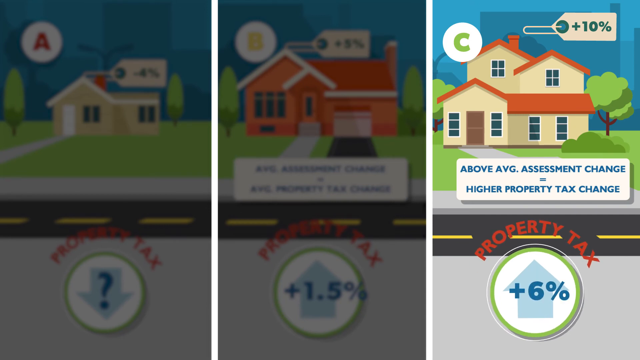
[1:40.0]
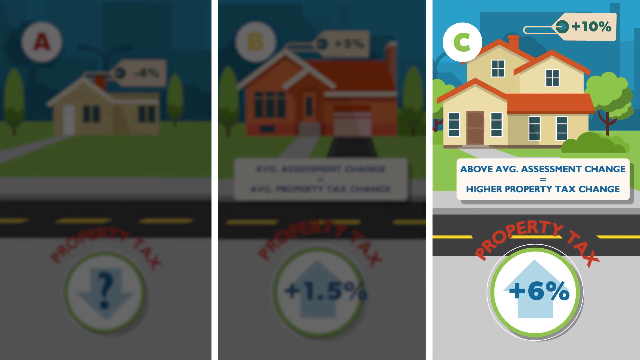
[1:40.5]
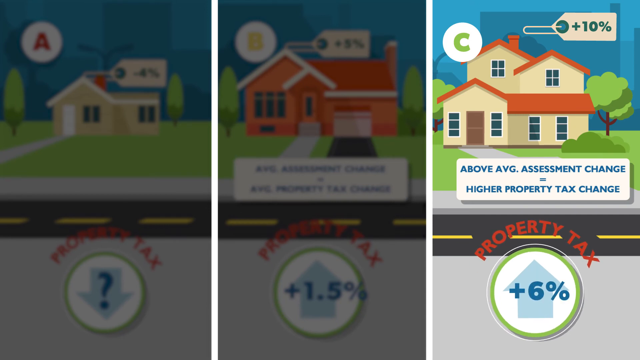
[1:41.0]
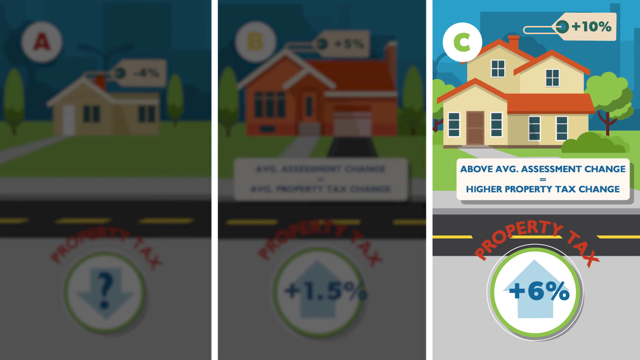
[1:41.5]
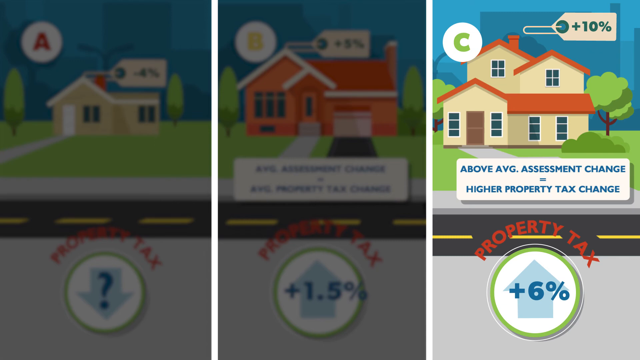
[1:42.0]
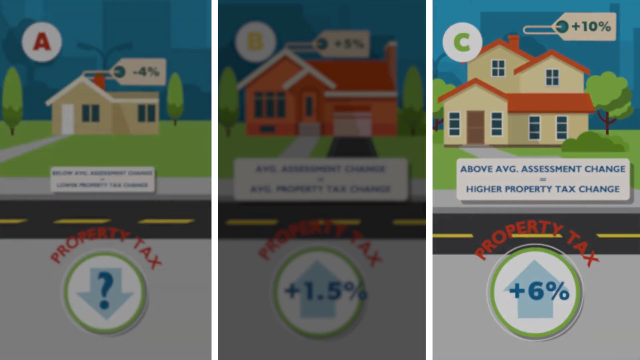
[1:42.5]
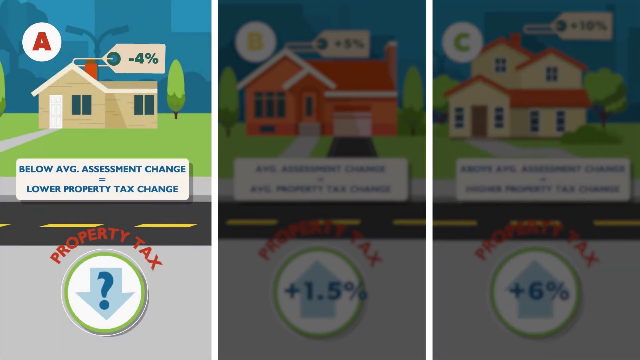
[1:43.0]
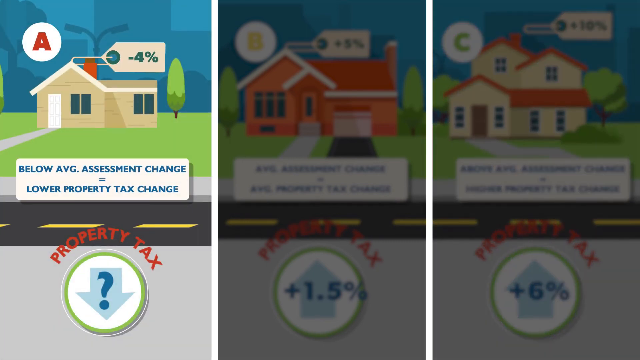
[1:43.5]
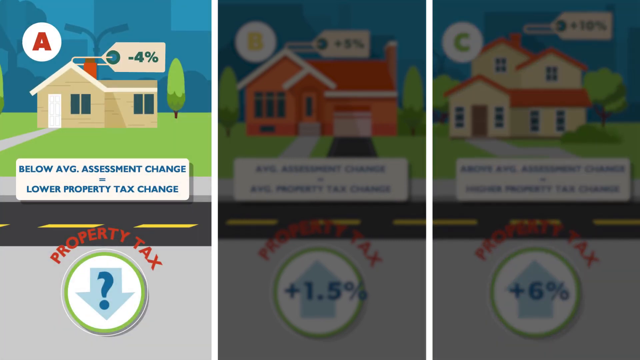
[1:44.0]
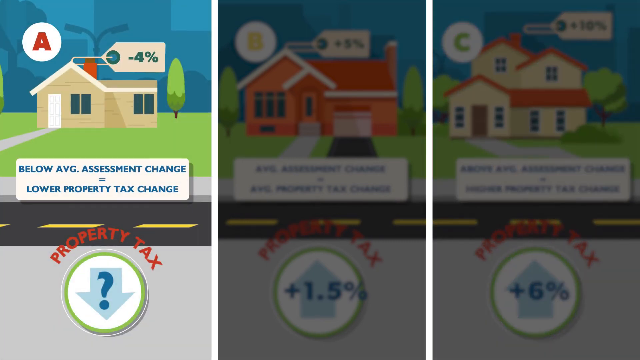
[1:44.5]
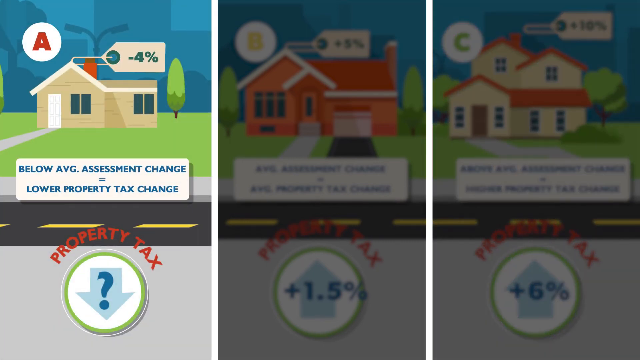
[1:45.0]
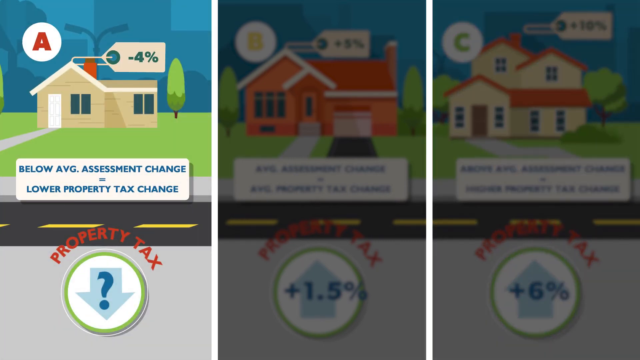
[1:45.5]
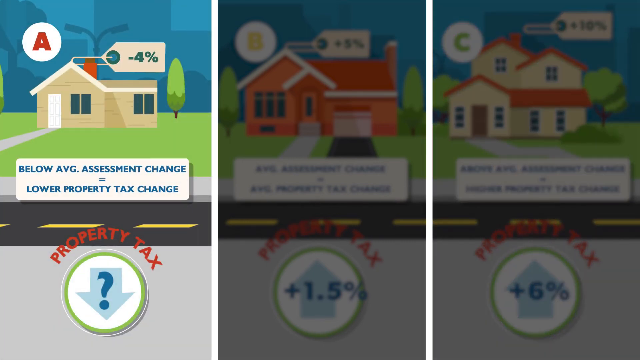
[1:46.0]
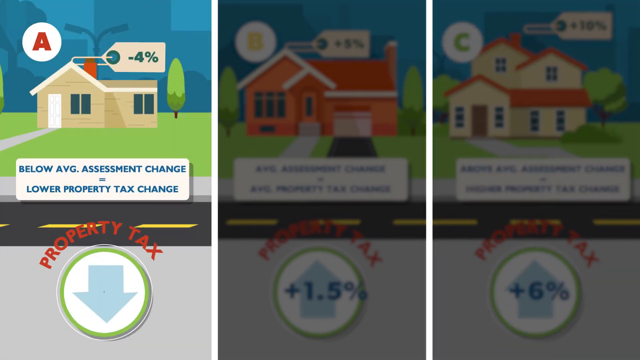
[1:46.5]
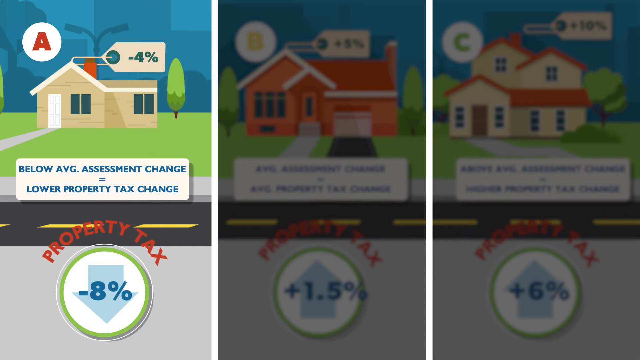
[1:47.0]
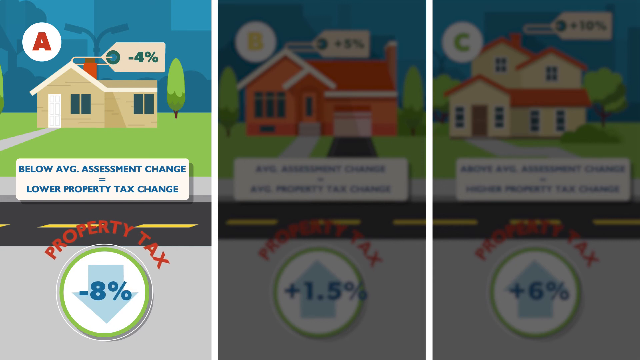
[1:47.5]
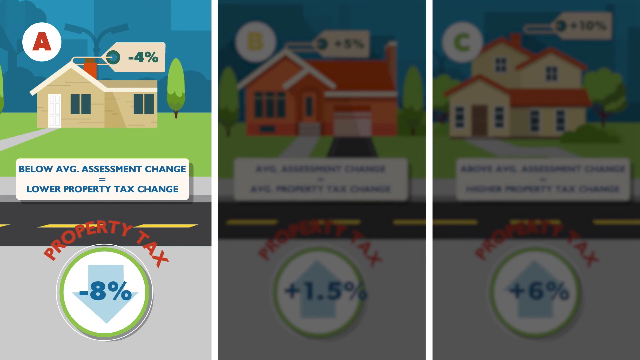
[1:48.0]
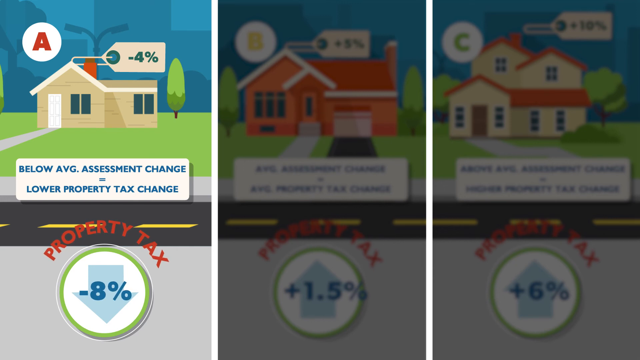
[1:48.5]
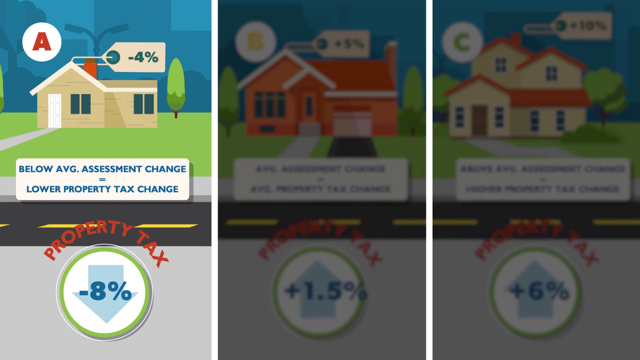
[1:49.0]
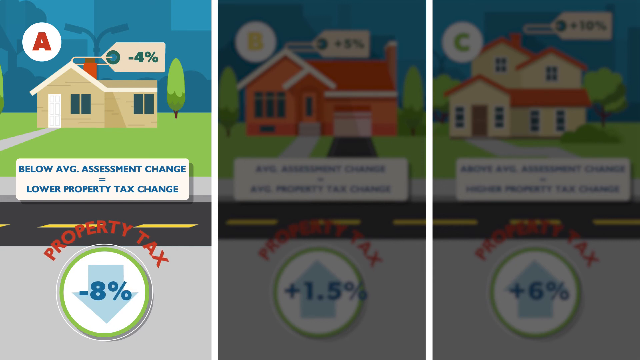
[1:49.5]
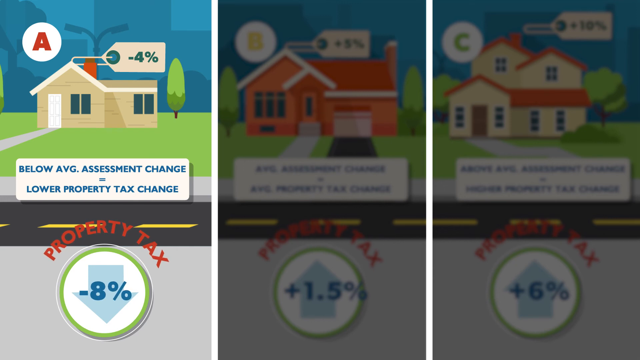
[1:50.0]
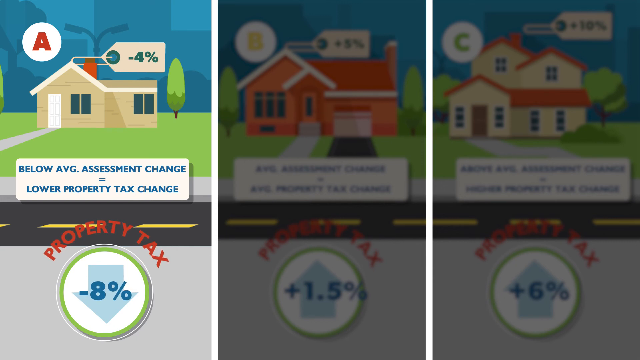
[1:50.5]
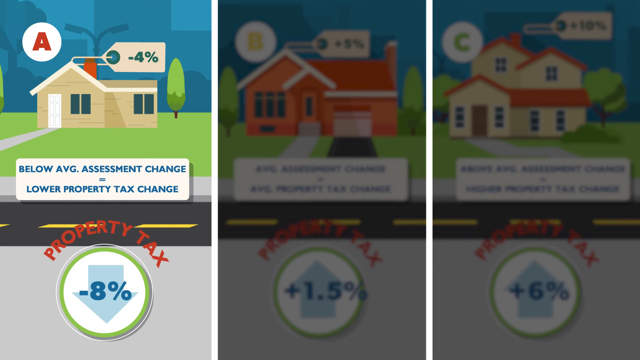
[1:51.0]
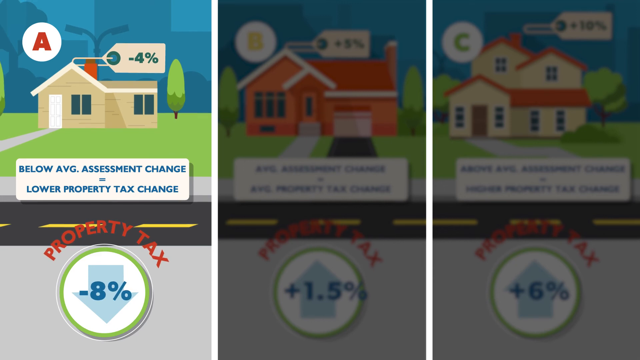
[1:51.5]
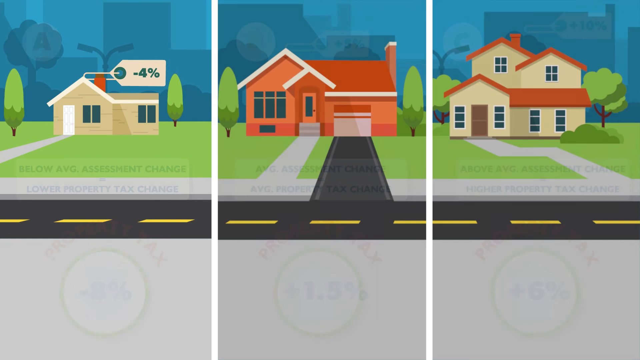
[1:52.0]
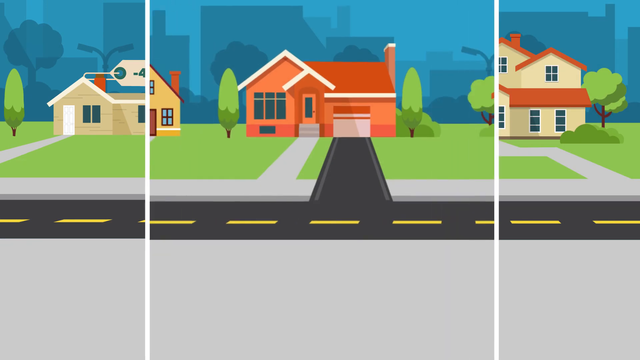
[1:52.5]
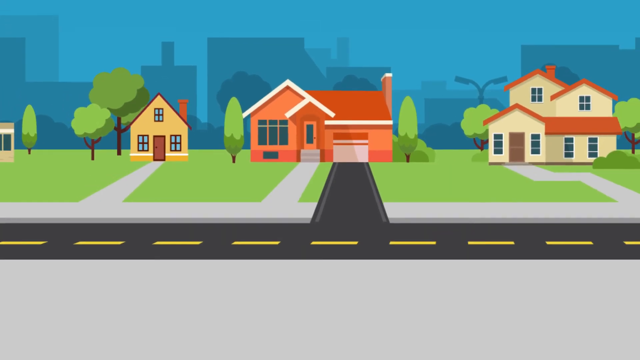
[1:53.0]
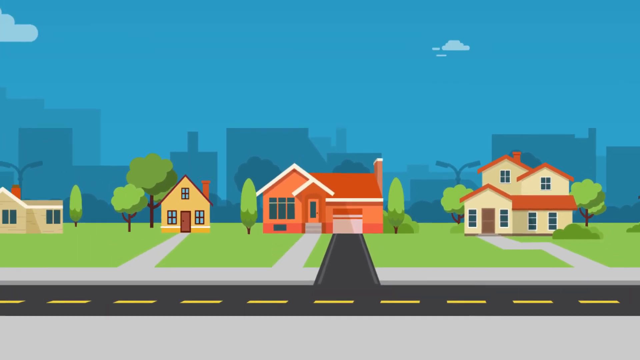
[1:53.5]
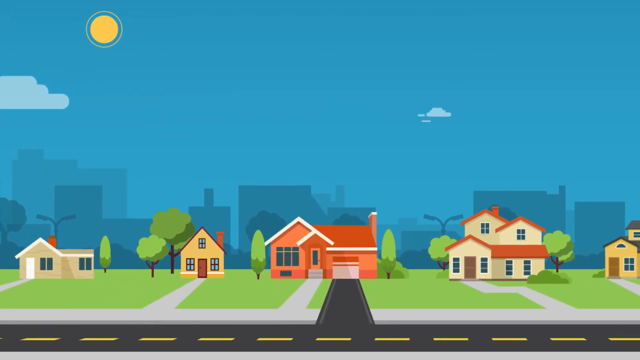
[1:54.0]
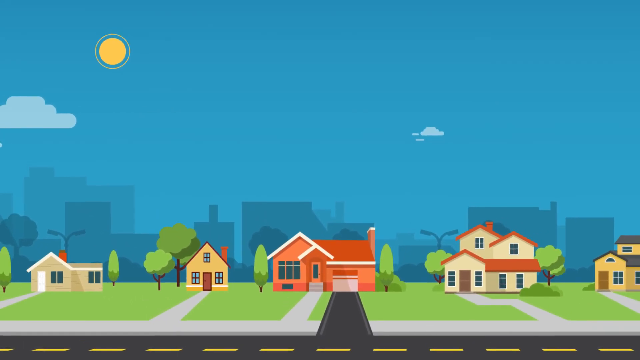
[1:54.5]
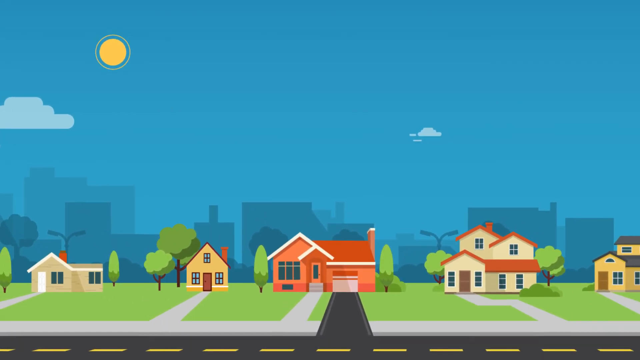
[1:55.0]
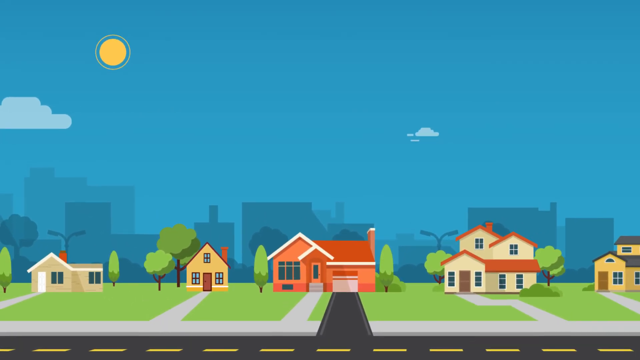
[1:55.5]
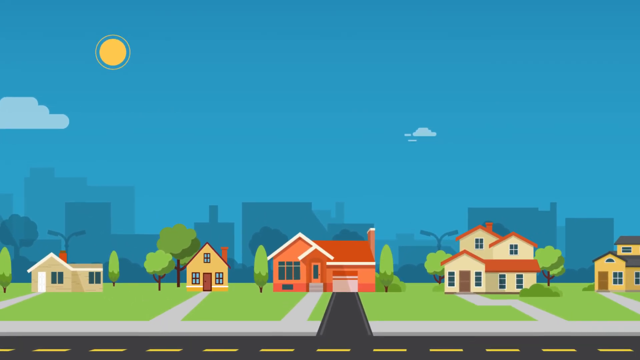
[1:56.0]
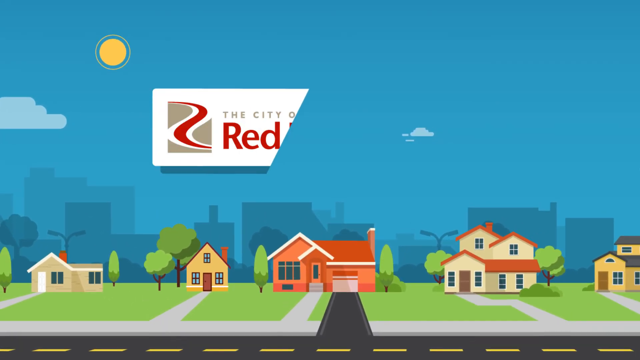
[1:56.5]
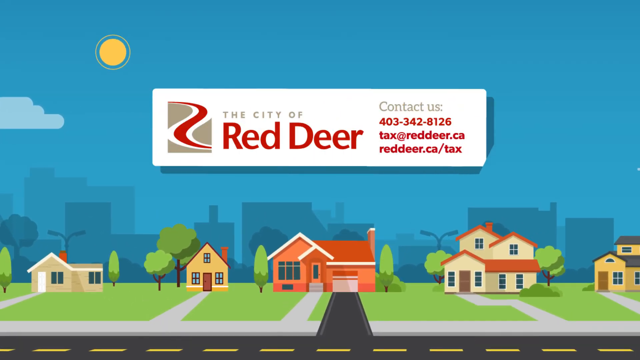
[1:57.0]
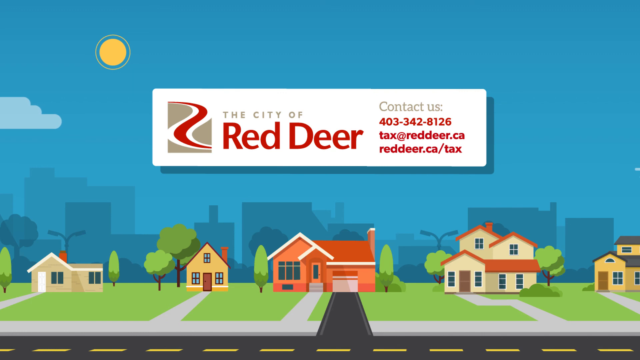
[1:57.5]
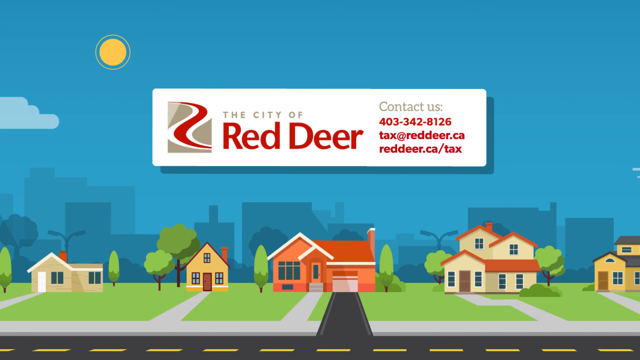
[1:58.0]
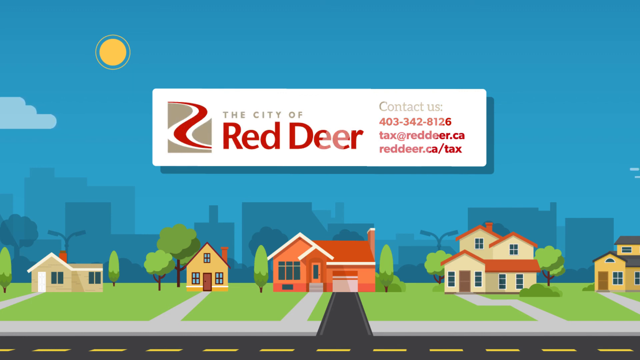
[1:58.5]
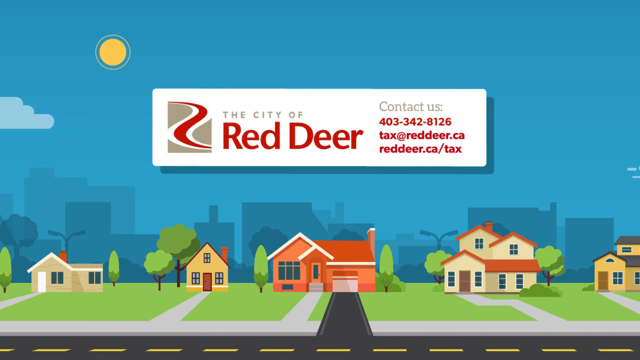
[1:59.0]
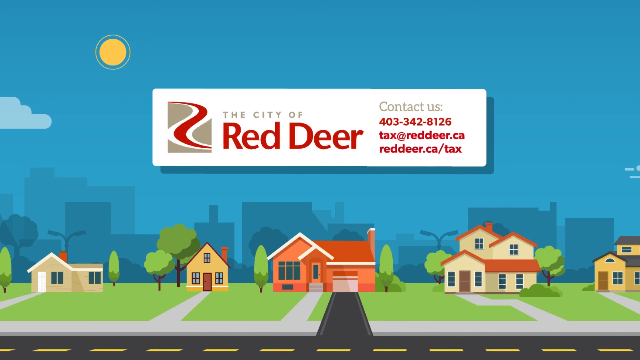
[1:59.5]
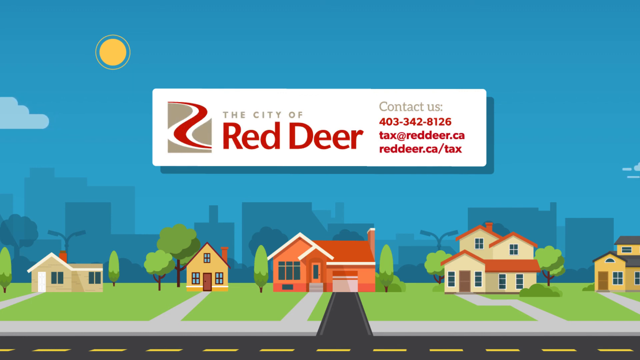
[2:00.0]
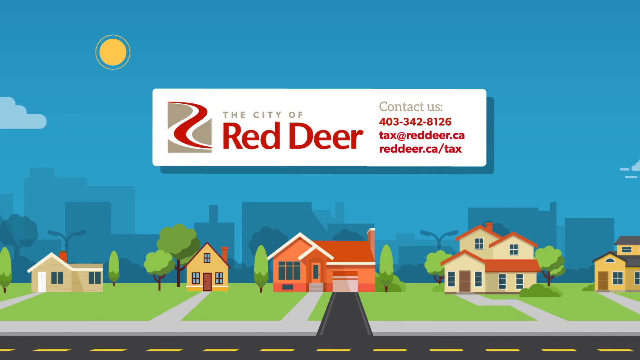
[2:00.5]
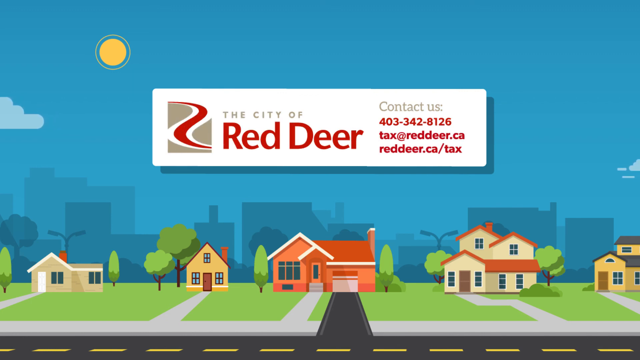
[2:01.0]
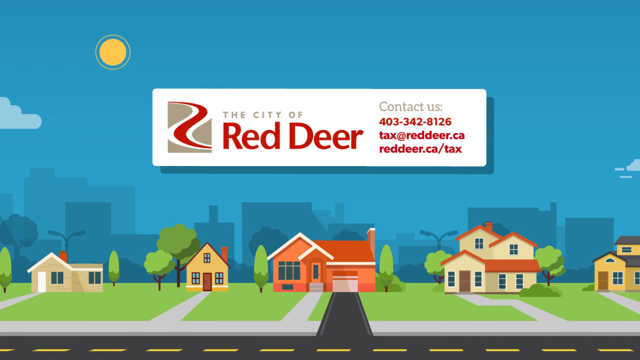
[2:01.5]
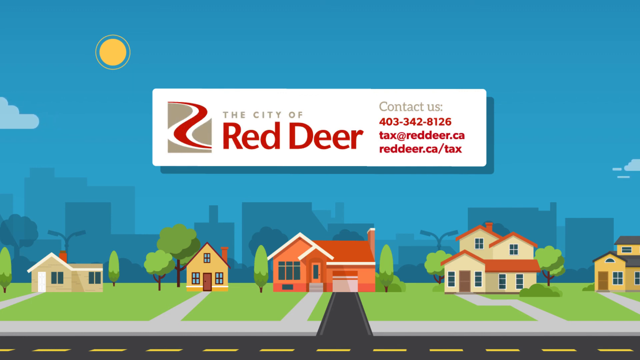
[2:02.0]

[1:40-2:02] The presentation from the city of Red Deer continues with a comparison of property tax amounts for different houses with different values. House A is at minus 5.4%, with the statement that a below-average assessment change equals a lower property tax change, so A's property tax change is minus 8%. It moves to property B at plus 5%, but before that is covered the presentation ends, and the city of Red Deer logo is shown with contact details, including the website, email and phone numbers.